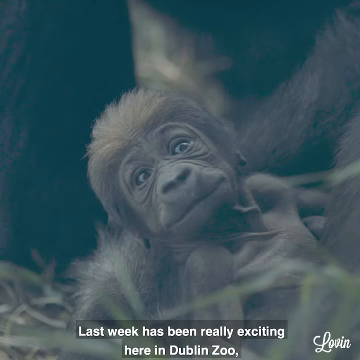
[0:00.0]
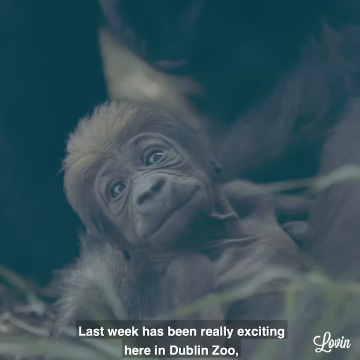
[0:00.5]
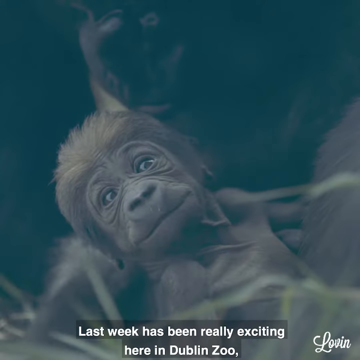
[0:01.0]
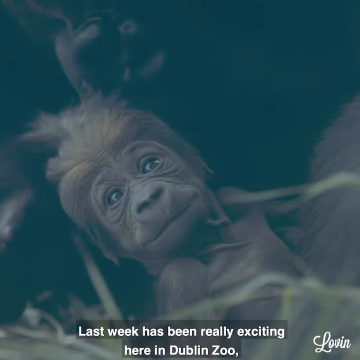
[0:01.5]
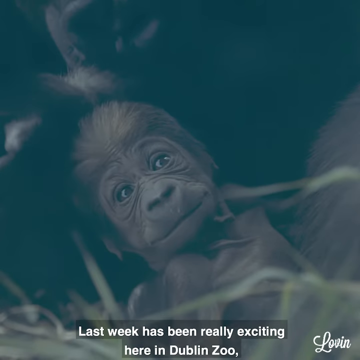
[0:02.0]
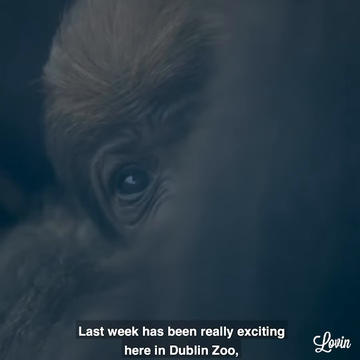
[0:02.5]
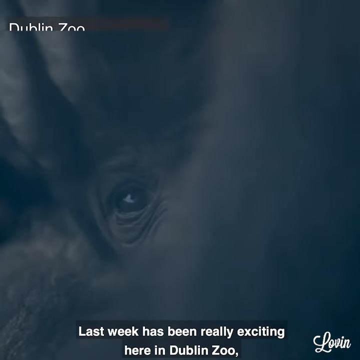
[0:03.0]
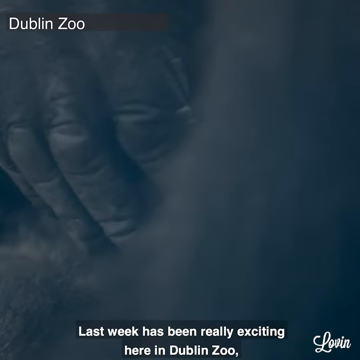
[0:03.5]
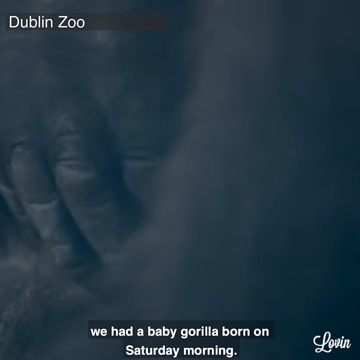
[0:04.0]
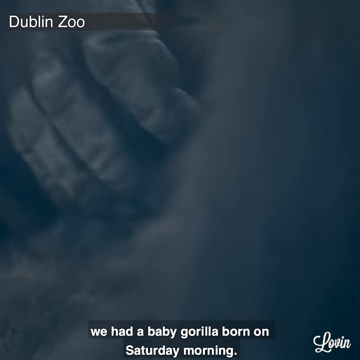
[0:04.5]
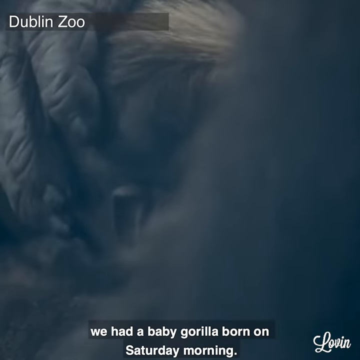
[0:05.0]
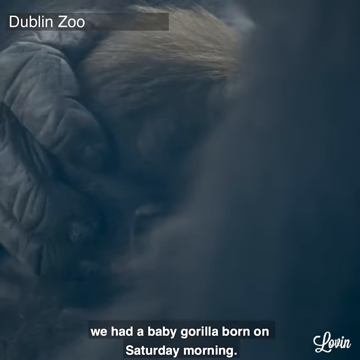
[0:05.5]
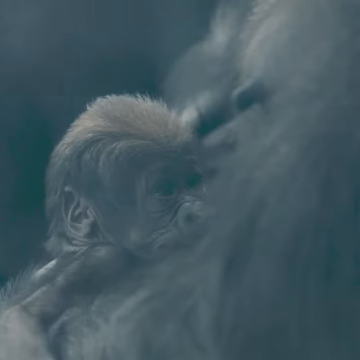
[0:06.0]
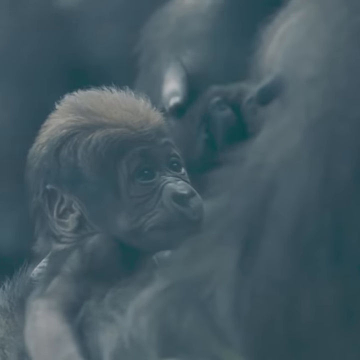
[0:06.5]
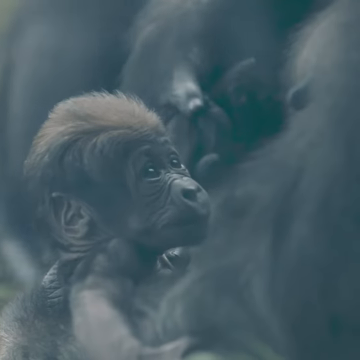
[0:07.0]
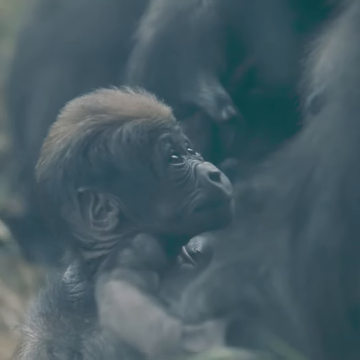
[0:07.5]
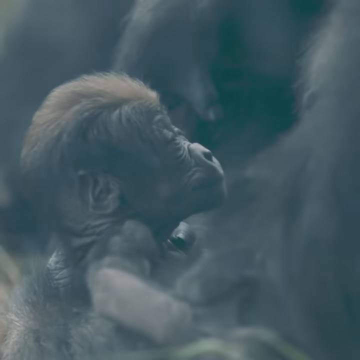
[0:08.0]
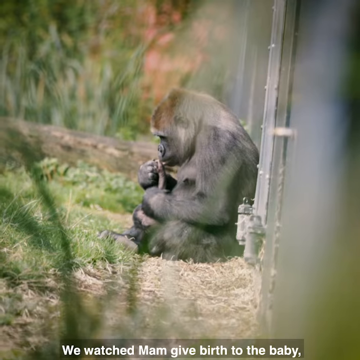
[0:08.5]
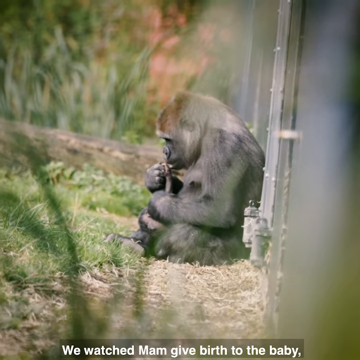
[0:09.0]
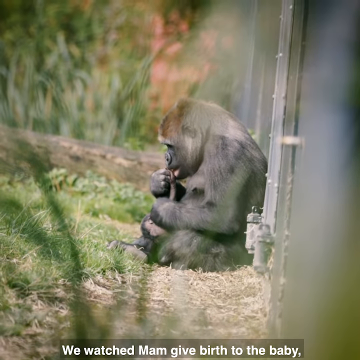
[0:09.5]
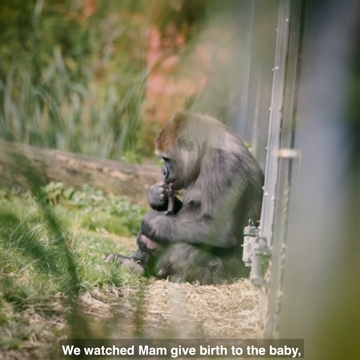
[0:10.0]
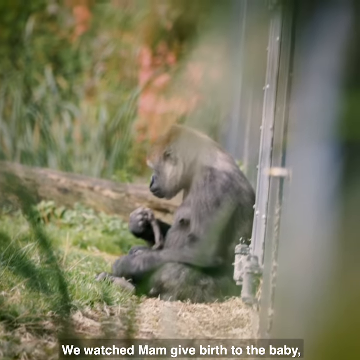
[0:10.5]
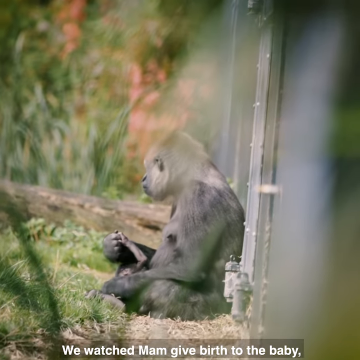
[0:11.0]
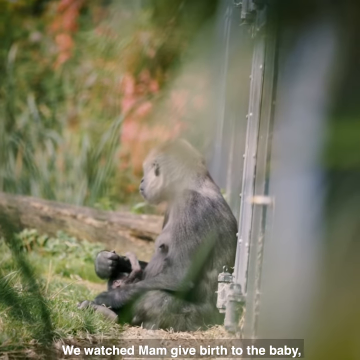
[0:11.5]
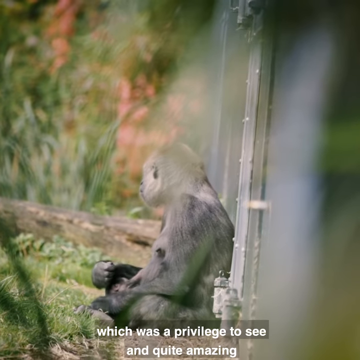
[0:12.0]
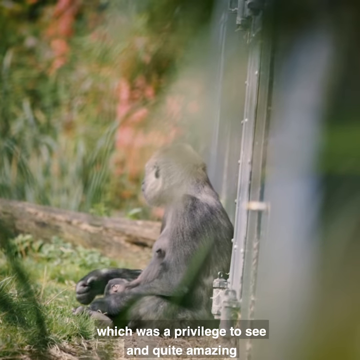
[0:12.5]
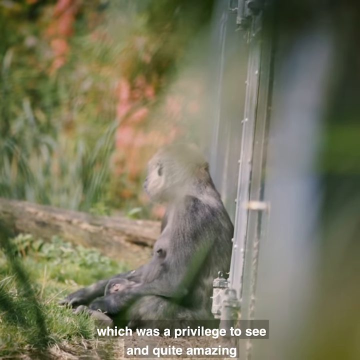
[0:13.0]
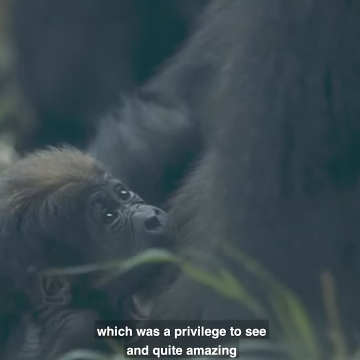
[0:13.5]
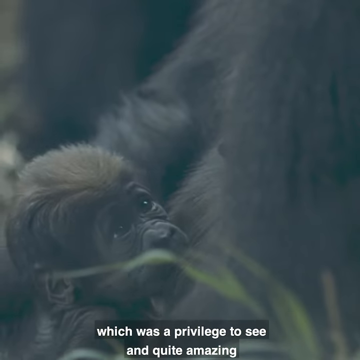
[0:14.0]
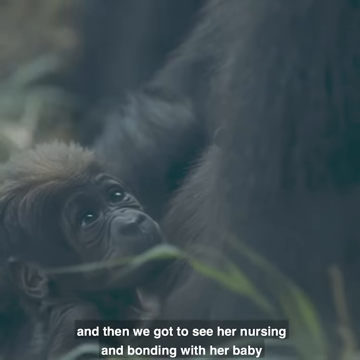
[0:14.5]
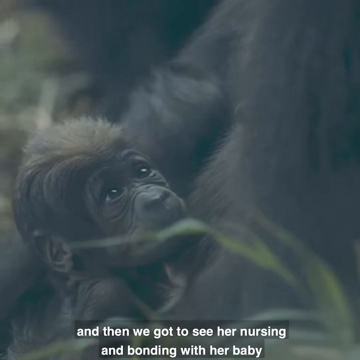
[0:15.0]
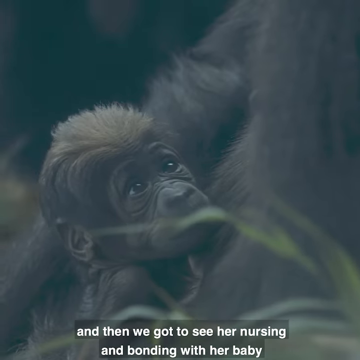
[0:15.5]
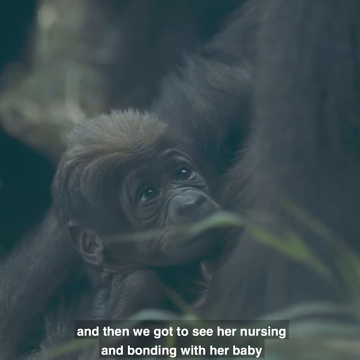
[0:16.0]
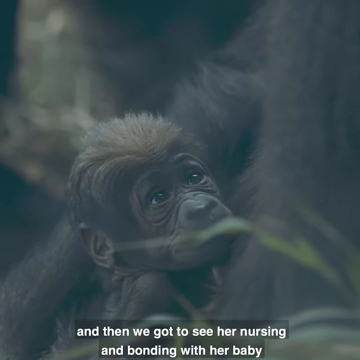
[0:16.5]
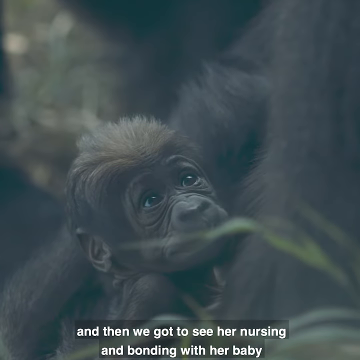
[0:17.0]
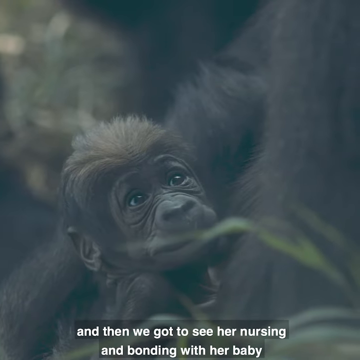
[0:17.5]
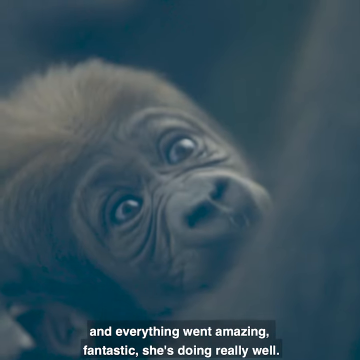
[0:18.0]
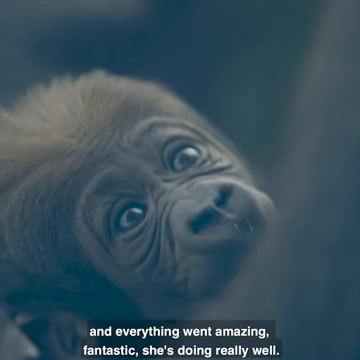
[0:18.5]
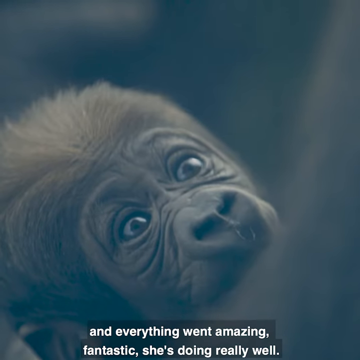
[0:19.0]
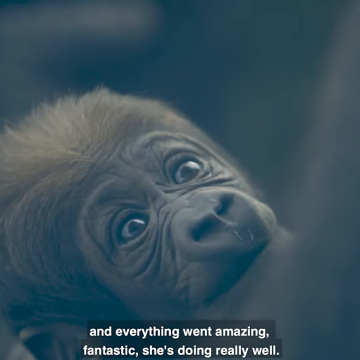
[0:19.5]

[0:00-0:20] A baby ape, apparently some sort of monkey, has its face right in the middle of the frame. It has a very wide nose, a straight mouth and lots of little furry hair on the top of its head, and it is clearly a baby. Text reads "last week has been really exciting here in Dublin Zoo" and "we had a baby gorilla born on Saturday morning." In the lower right-hand corner is the word "Lovin'." More text reads "we watched Ma give birth to him, which was a privilege to see and quite amazing, and then we got to see her nursing and bonding with her baby," followed by "everything went amazing, fantastic." The baby looks up at its mother while it nurses. The mother holds the baby, and another ape, possibly the father, is off in the distance. The baby bonds with its mother, and text reads "she's doing very well."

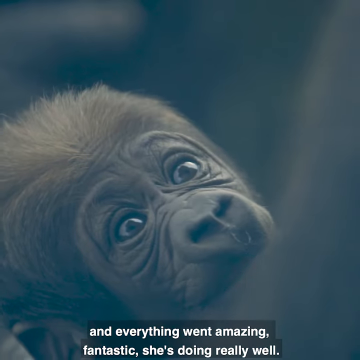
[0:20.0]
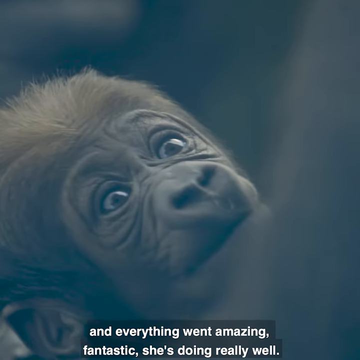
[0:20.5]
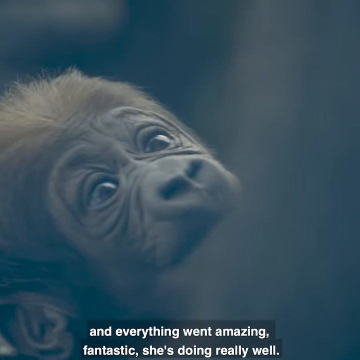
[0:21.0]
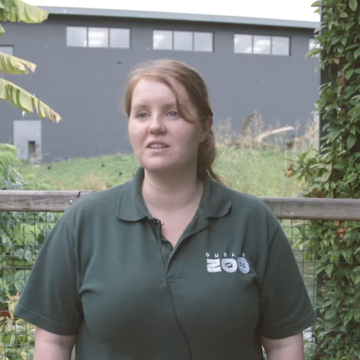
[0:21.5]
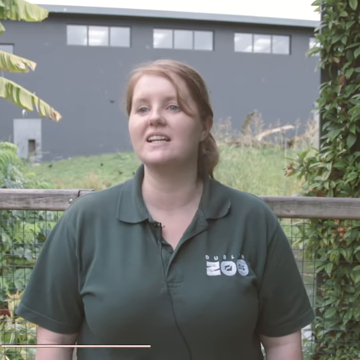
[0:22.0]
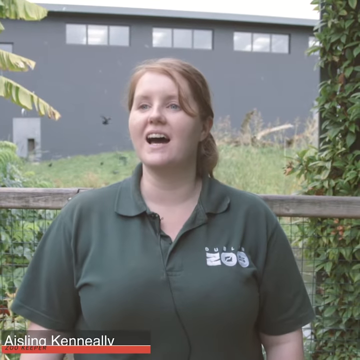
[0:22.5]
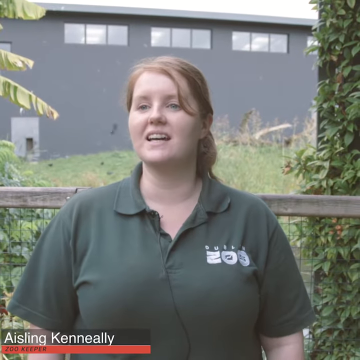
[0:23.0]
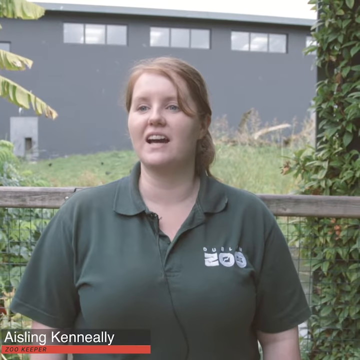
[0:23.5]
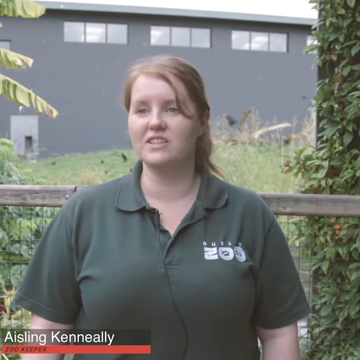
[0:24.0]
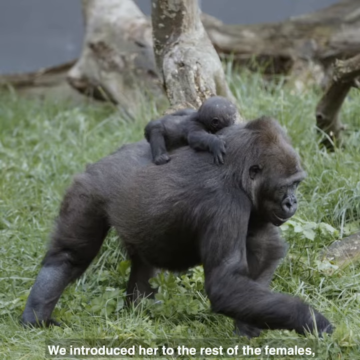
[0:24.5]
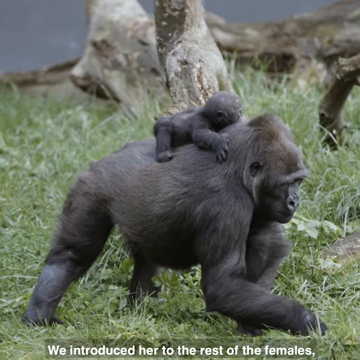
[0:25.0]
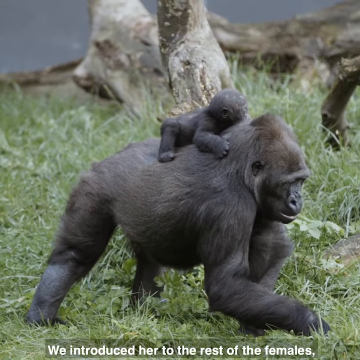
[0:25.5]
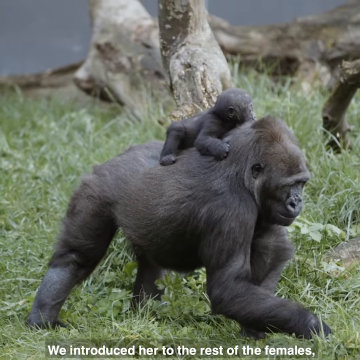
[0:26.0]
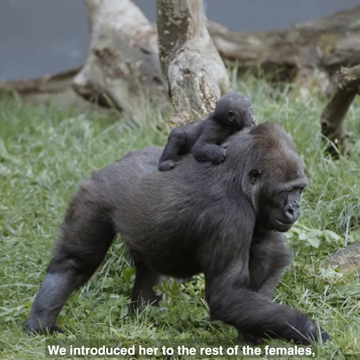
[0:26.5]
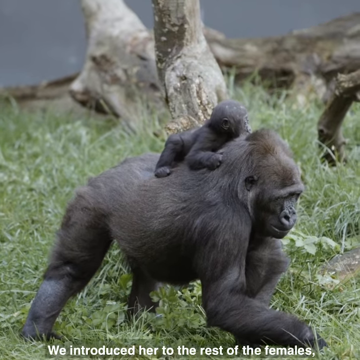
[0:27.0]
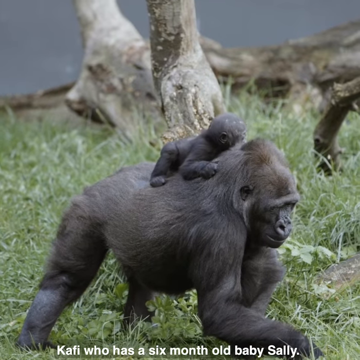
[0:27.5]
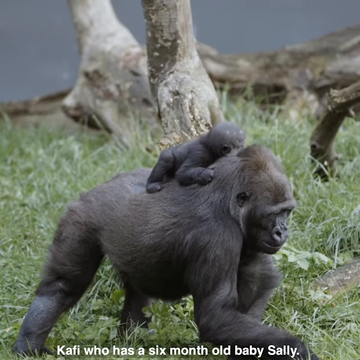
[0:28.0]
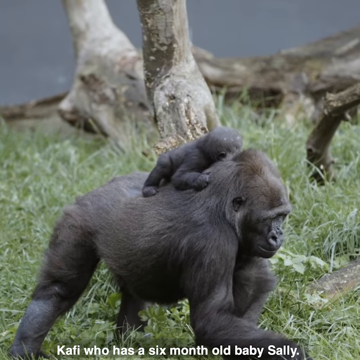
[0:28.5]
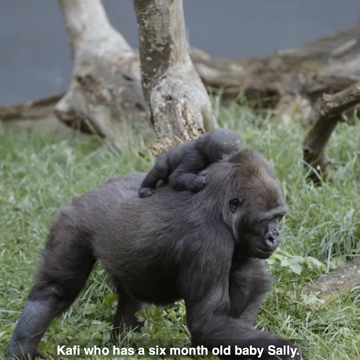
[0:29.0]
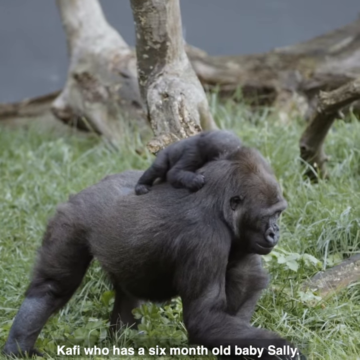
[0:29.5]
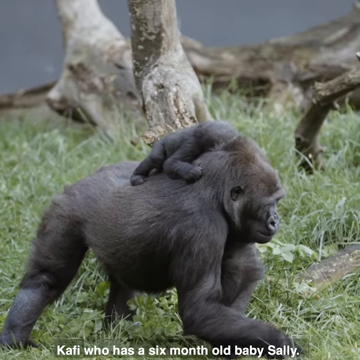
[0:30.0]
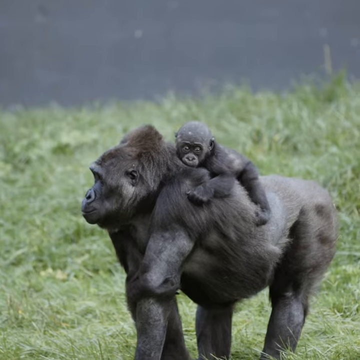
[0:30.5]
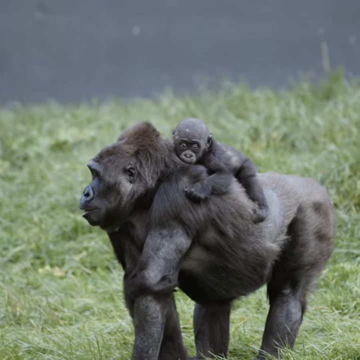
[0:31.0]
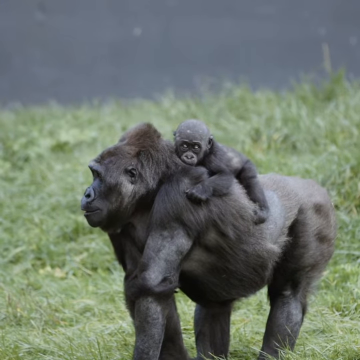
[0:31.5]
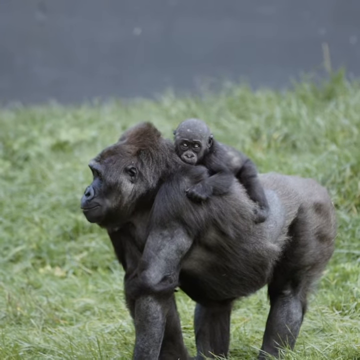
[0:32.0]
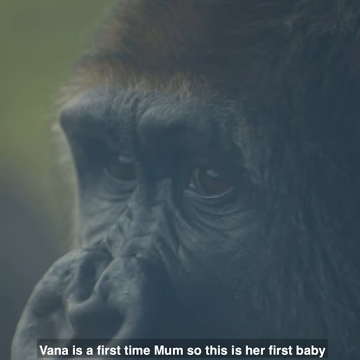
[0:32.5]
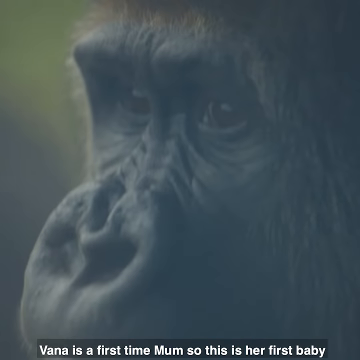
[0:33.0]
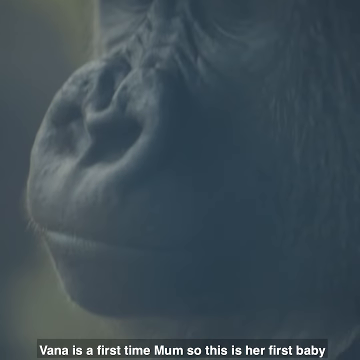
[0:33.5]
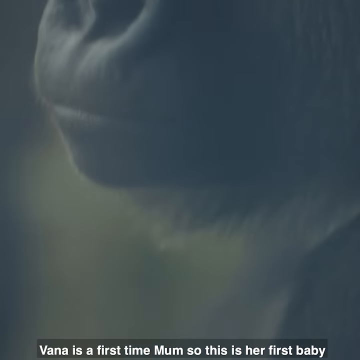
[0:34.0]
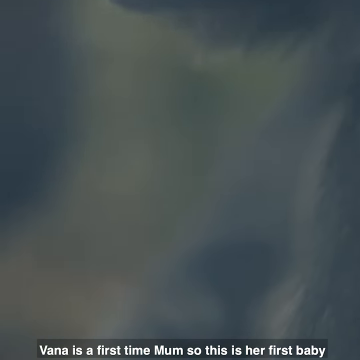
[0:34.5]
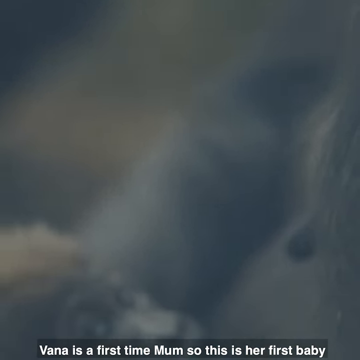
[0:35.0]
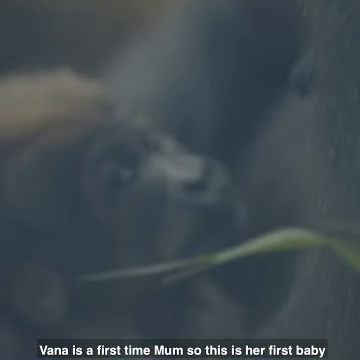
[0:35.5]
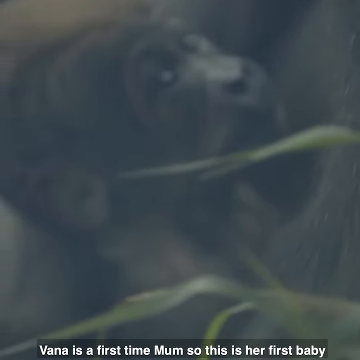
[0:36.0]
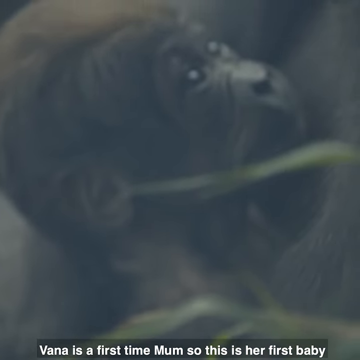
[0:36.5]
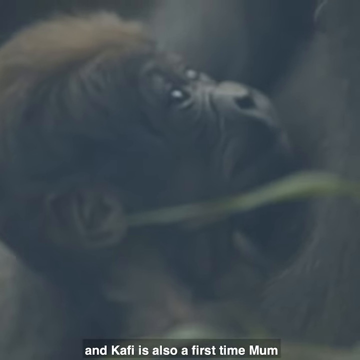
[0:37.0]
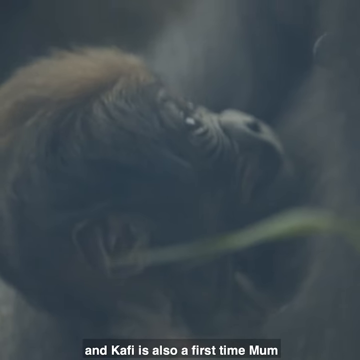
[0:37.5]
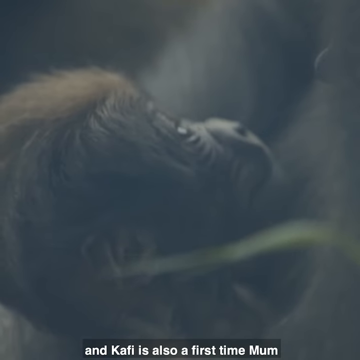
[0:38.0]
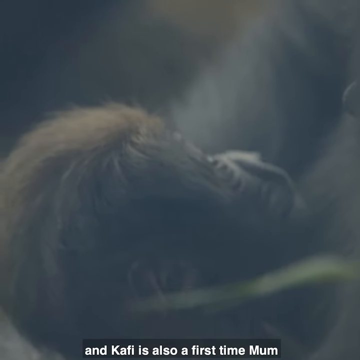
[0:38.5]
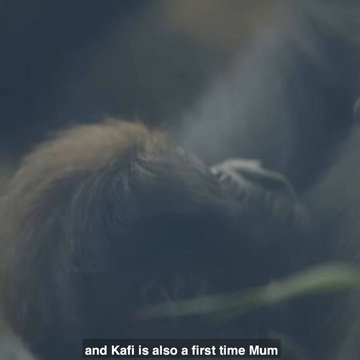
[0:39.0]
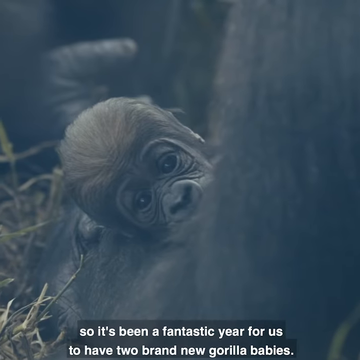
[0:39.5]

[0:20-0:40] The camera is zoomed in on a baby ape nursing from its mother. It has two big eyes, a wide flat nose and fluffy hair on top. Words at the bottom read "and everything went amazing, fantastic. She's doing very well." A woman is then interviewed; she wears a zoo shirt, and her name appears on the screen as "Ainsley Kinnelly." Text reads "we introduced her to the rest of the females, Caffey, who has a six month old baby, Sally," followed by "Vanna is a first time mom," "Caffey is also a first time mom" and "so it's been a fantastic year for us." Another mother ape is shown in the background with her baby on her back, the baby seeming to be kind of resting there. A close-up follows of the new mother with her new baby.